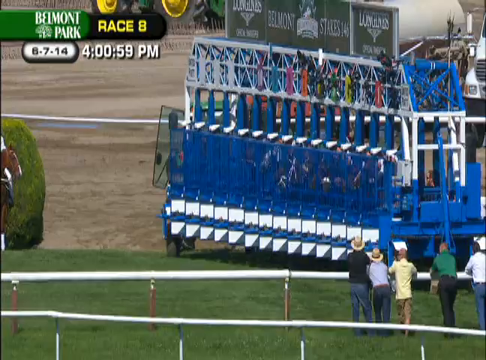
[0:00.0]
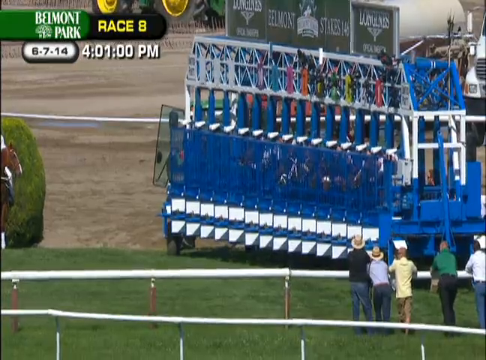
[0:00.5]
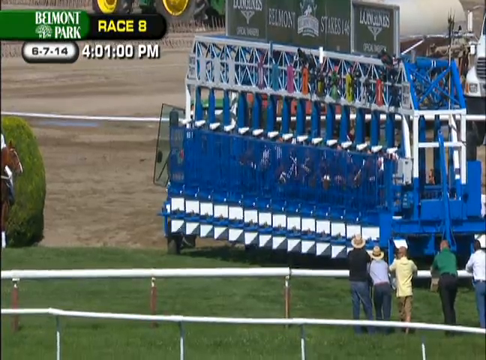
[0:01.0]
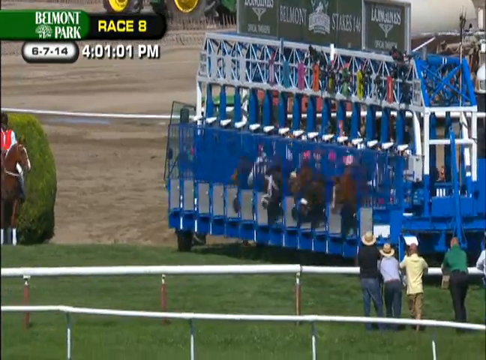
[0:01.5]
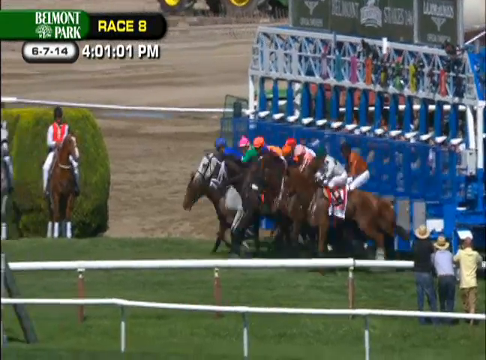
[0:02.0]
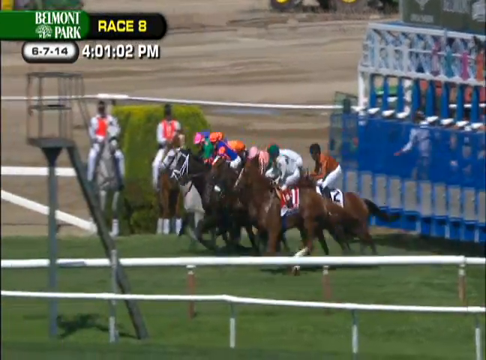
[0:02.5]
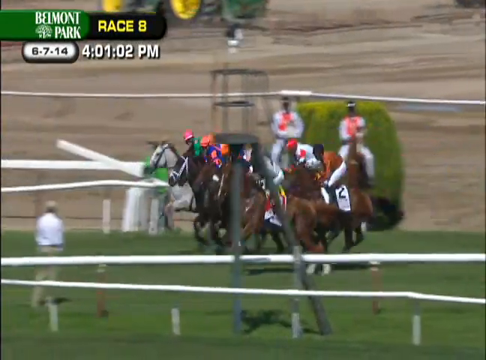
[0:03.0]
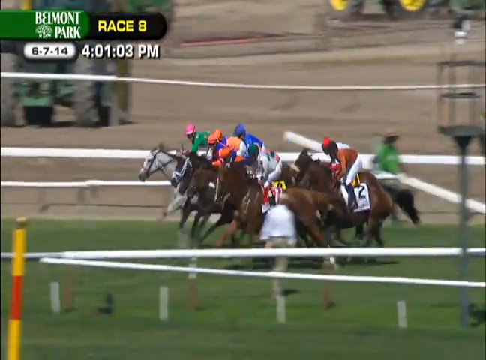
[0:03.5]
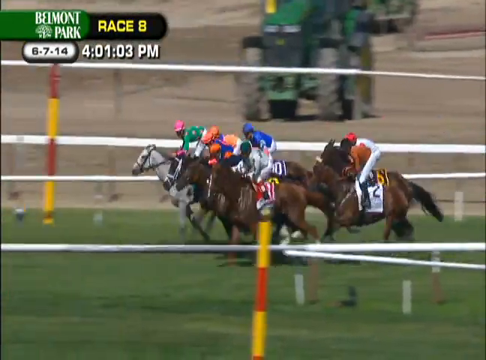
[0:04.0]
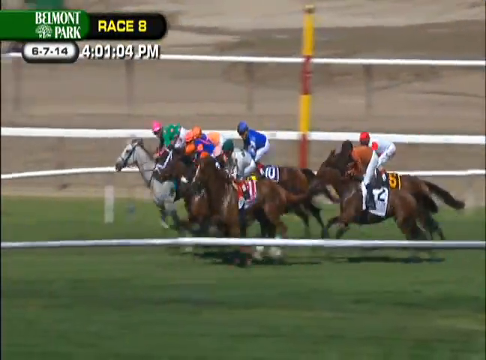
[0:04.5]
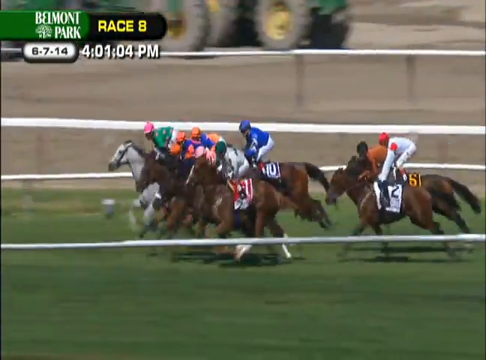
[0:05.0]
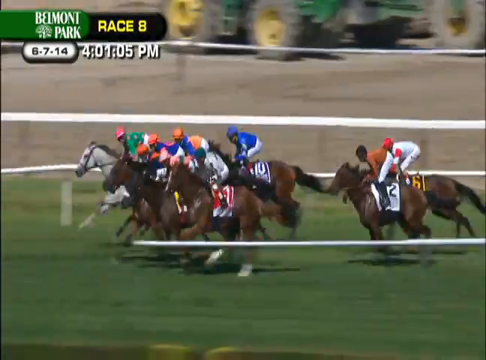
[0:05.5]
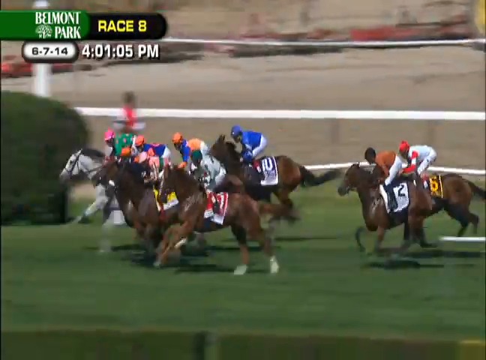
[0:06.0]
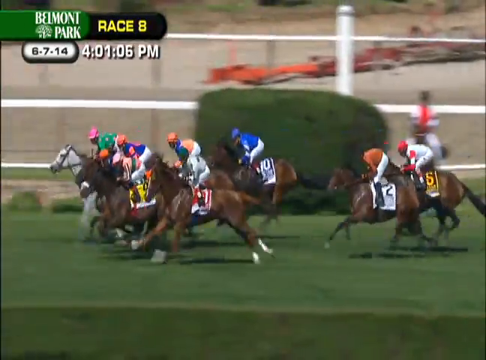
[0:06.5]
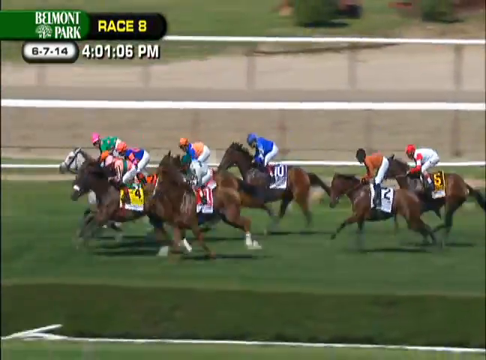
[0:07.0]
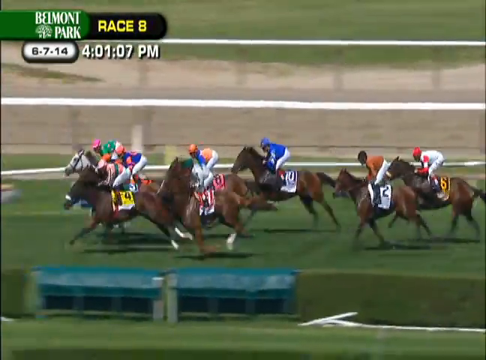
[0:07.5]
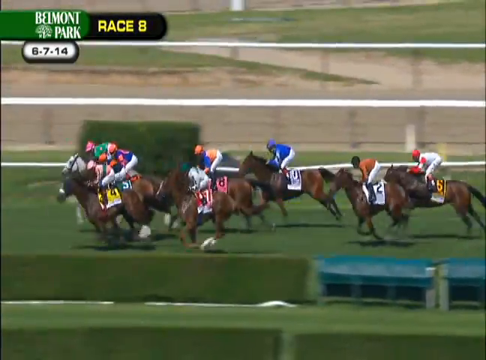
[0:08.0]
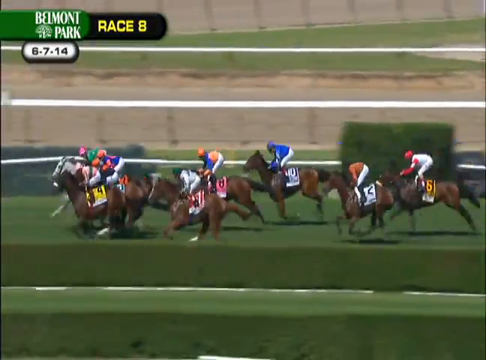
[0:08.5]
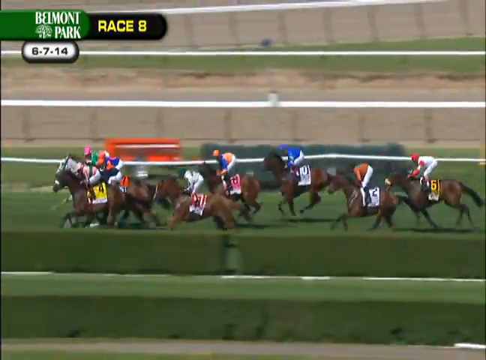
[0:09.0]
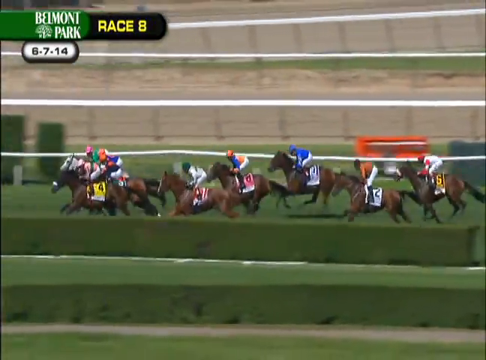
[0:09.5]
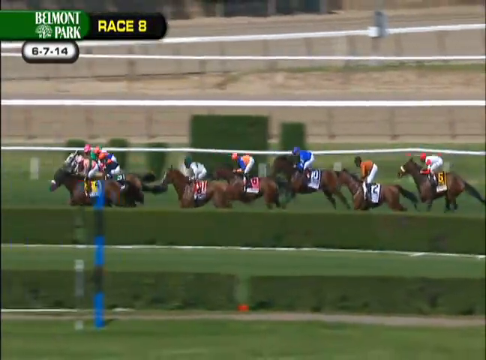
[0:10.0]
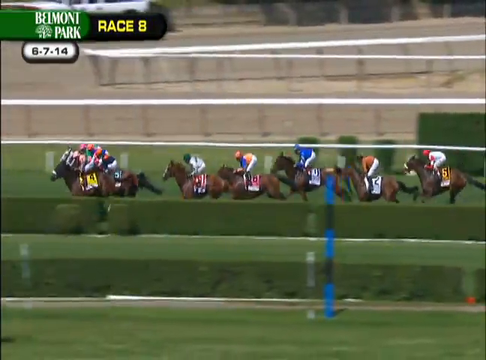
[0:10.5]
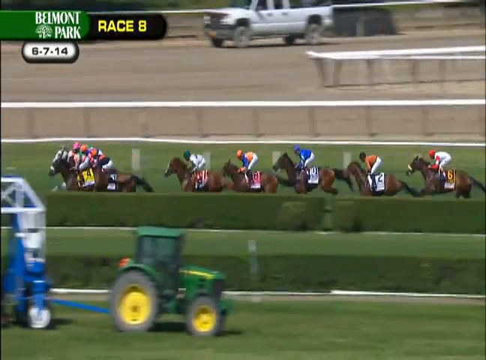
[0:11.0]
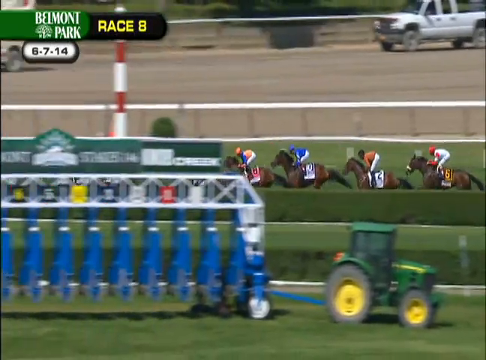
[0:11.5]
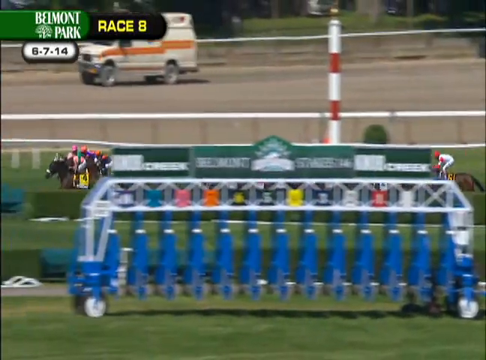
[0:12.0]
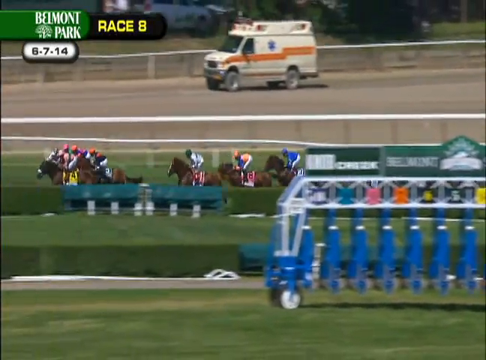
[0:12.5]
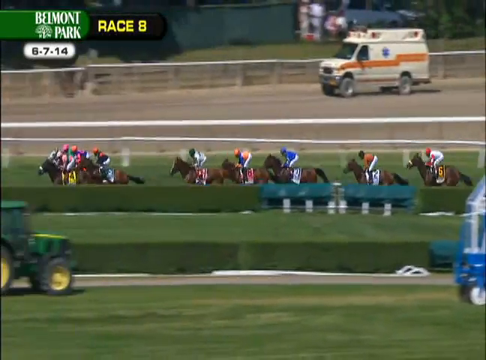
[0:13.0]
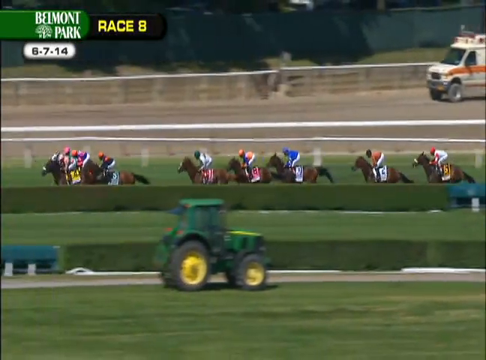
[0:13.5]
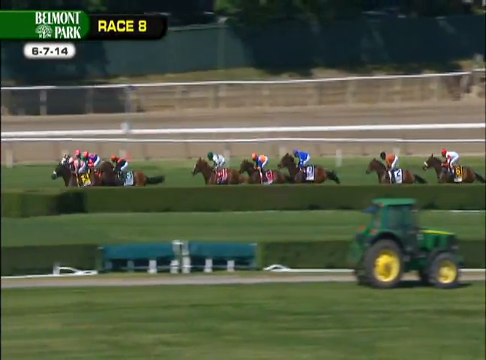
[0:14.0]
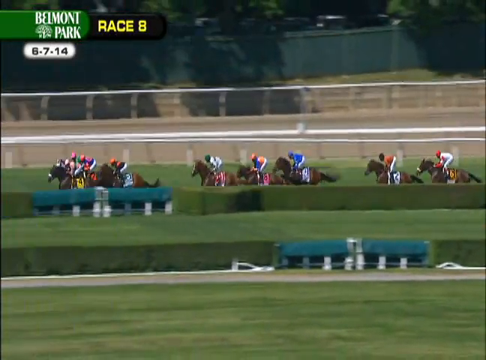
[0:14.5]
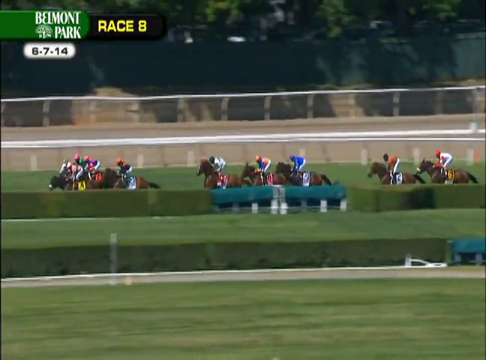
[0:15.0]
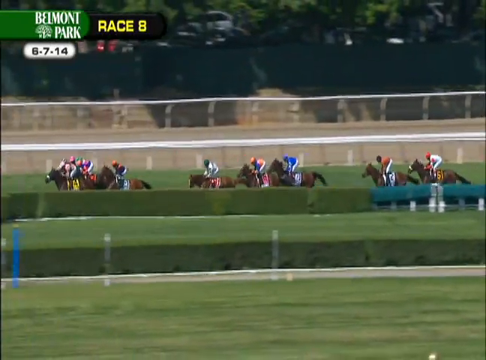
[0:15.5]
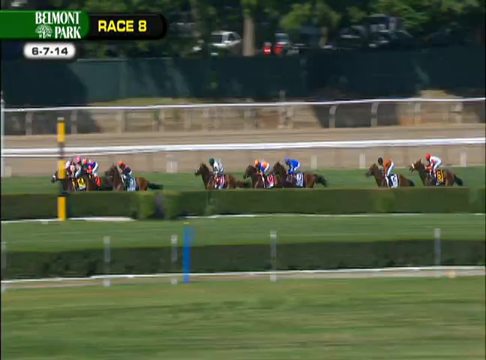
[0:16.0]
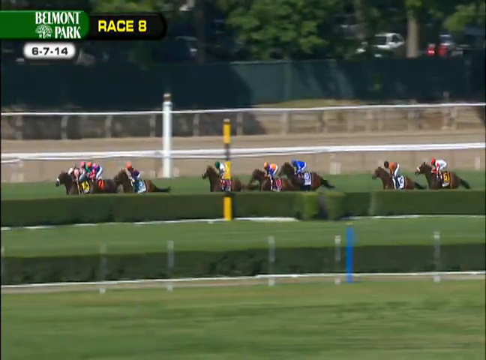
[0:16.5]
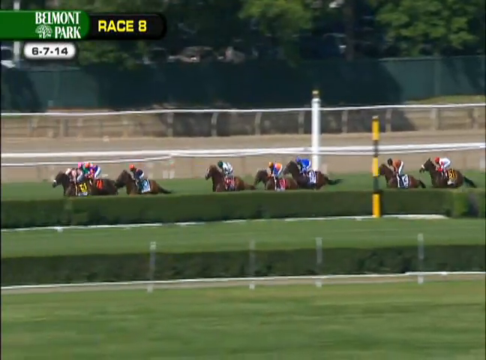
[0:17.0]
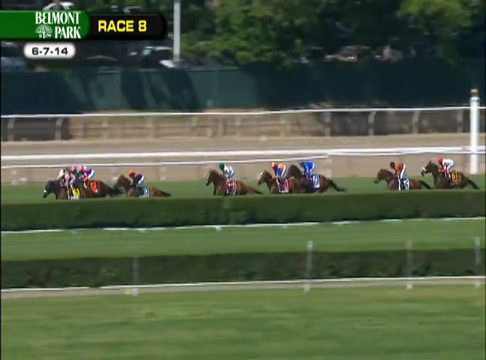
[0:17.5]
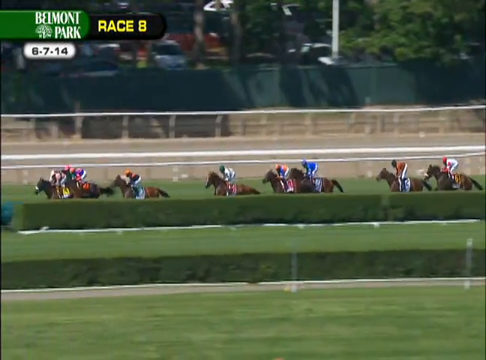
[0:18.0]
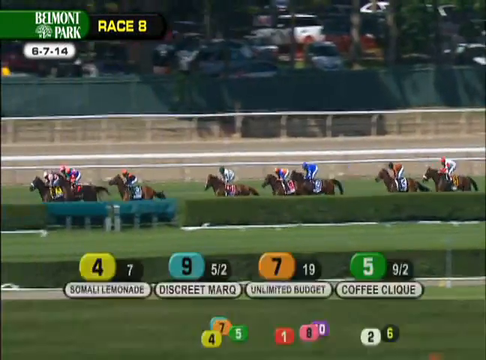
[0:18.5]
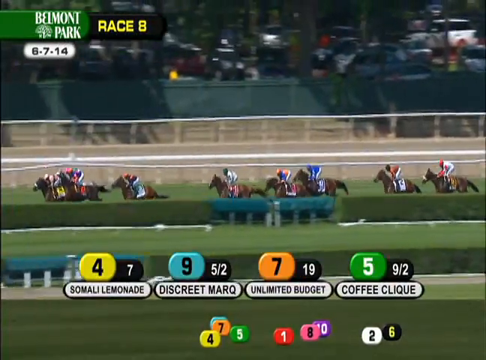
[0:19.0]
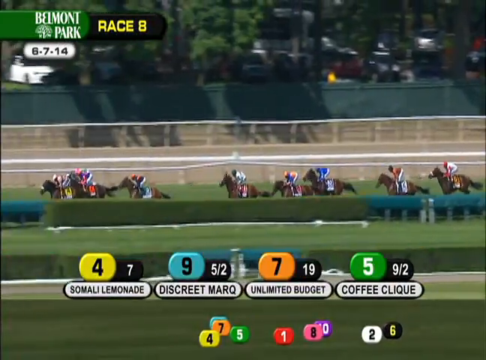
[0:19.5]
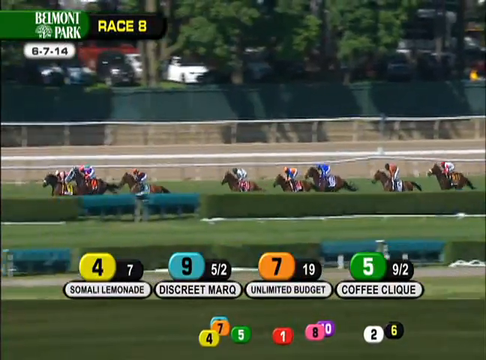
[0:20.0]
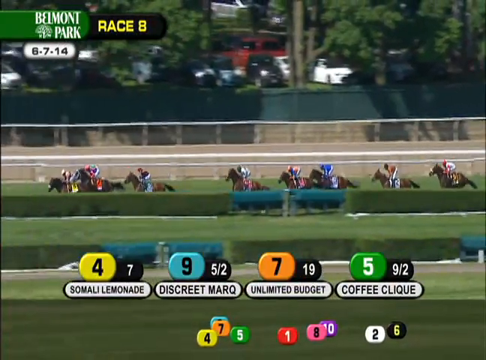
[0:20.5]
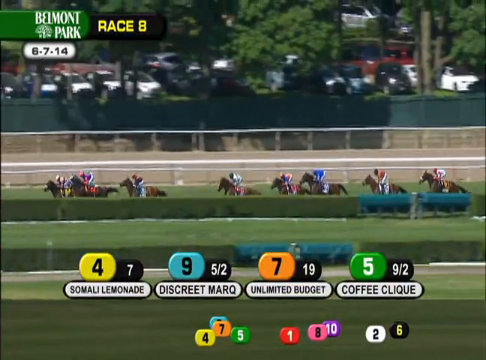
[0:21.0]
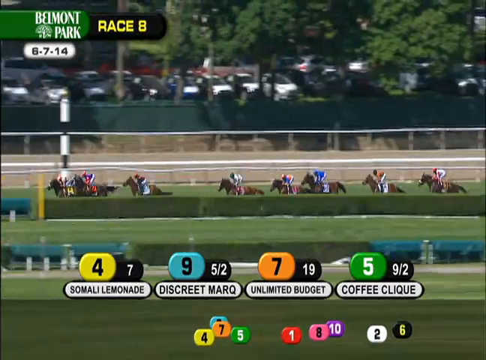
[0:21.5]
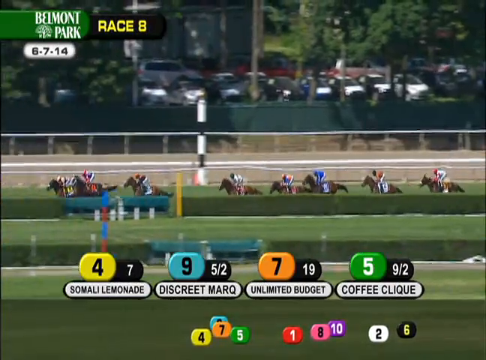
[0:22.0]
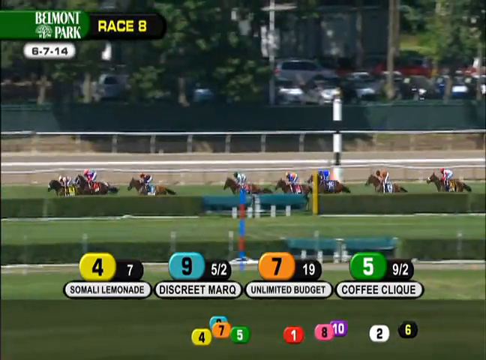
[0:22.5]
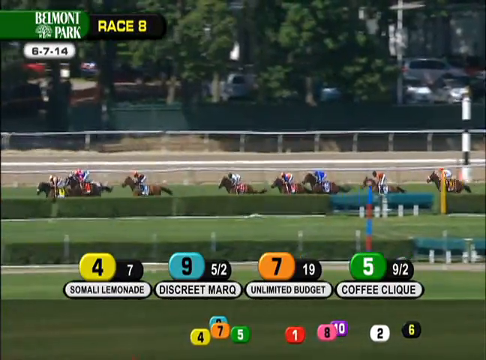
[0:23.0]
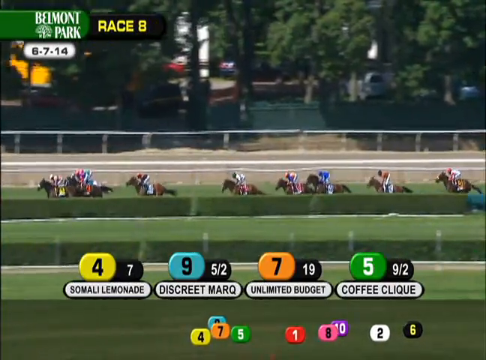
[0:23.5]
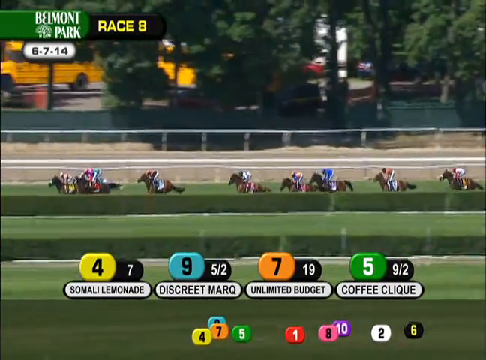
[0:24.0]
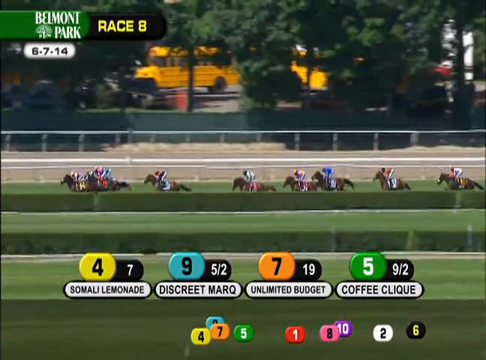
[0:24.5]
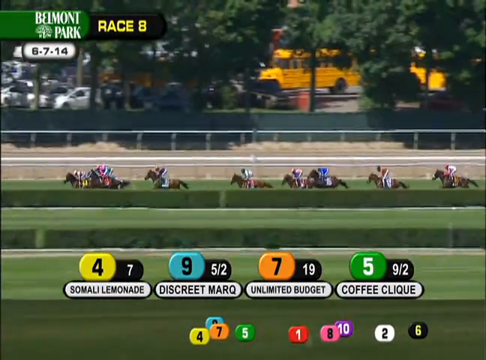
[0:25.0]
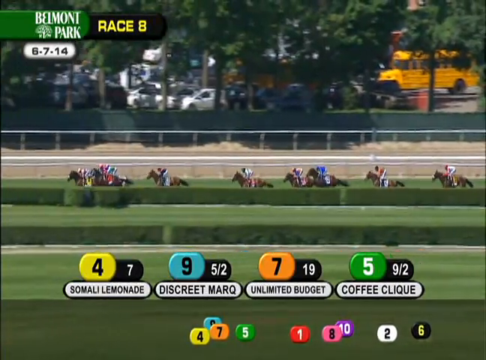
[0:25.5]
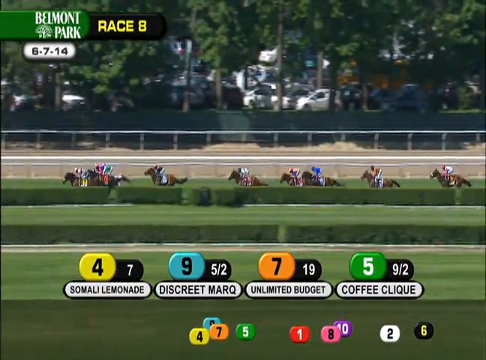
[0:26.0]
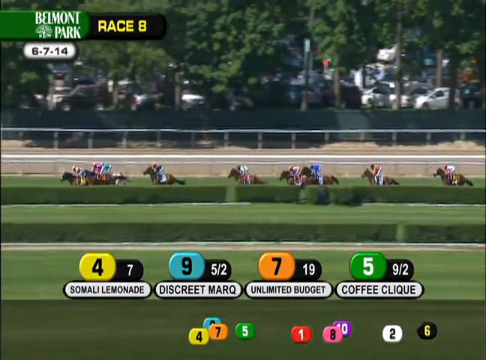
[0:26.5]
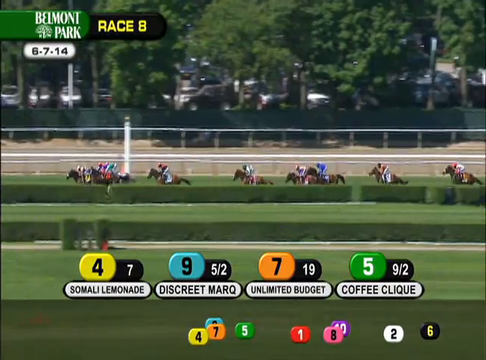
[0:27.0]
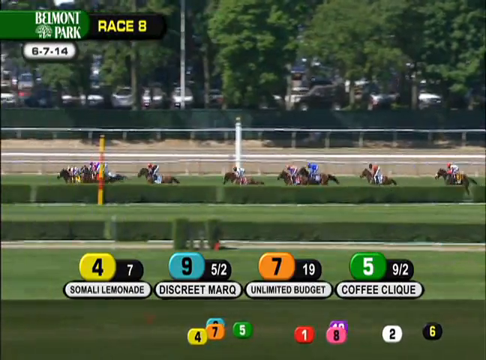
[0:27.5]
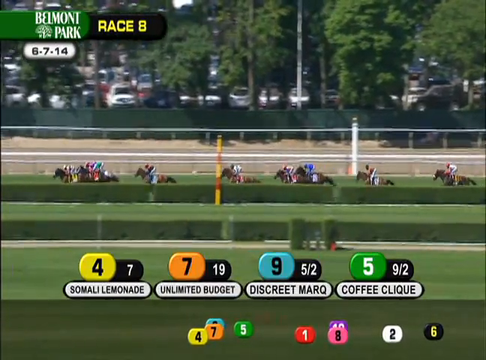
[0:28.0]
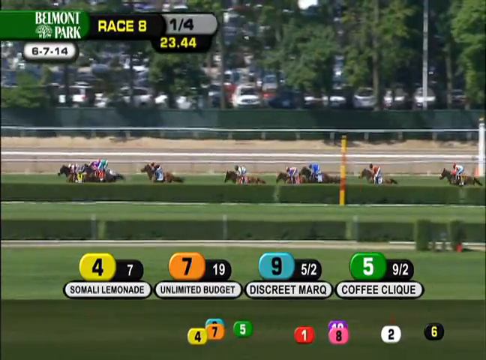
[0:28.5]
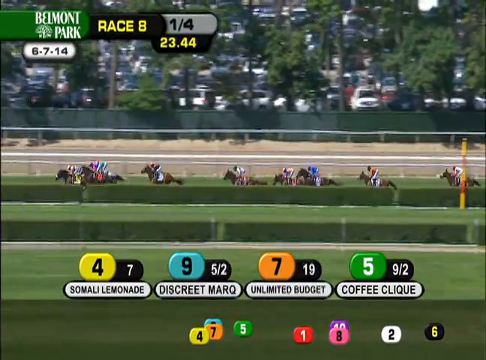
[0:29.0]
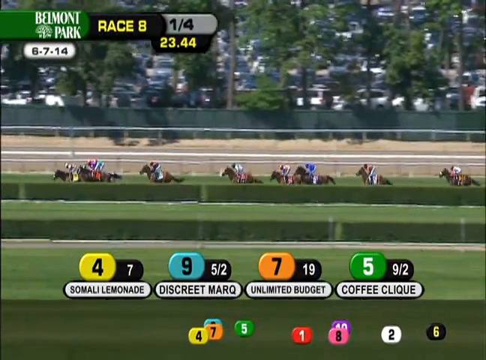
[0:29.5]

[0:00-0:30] A horse race is underway at Belmont Park on June 7th, 2014; this is race number eight, at 4:01 PM. Nine horses rush out of the starting gate, each ridden by a different jockey wearing different colored uniforms and helmets. The horses all run down a path surrounded by green shrubs and white guardrails. On the other side is a dirt road where an ambulance rides along. As the horses continue down the racetrack, the top four horses appear on a graphic at the bottom of the screen: number four, Somali Lemonade, in first place; number nine, Discreet Mark, in second; number seven, Unlimited Budget, in third; and number five, Coffee Click, in fourth. The horses keep running straight down the path with Somali Lemonade still in the lead. Below the top four are graphics of all the horses, which move in real time, the icons getting closer and farther from each other based on the horses' actual positions.